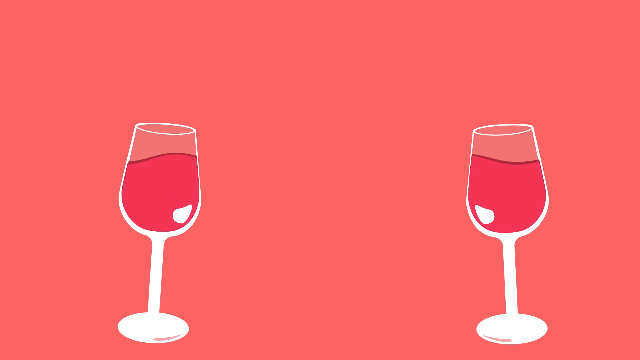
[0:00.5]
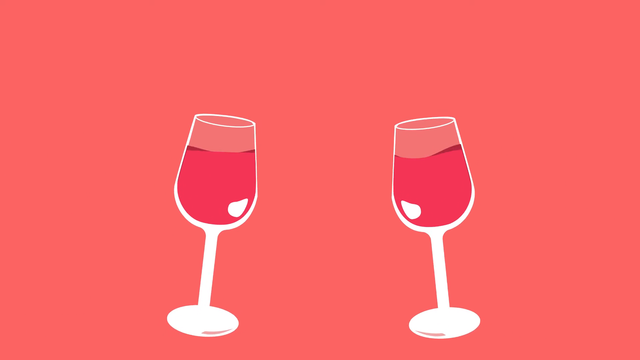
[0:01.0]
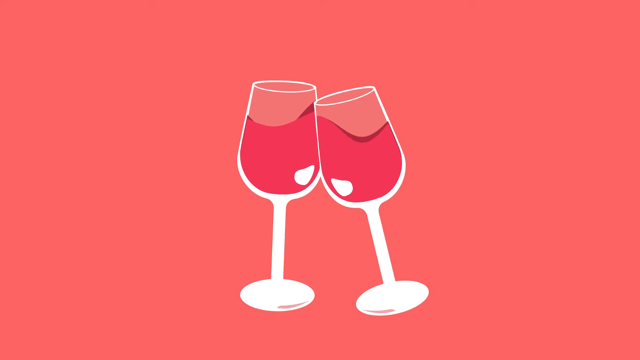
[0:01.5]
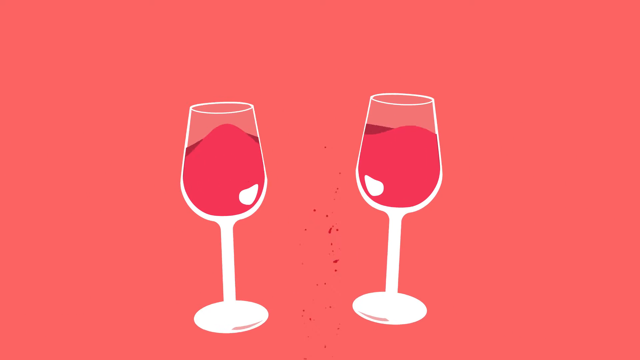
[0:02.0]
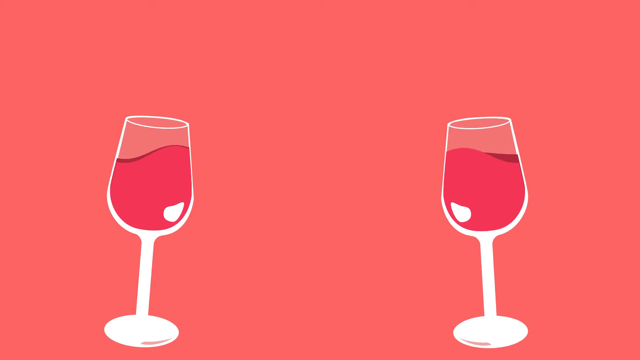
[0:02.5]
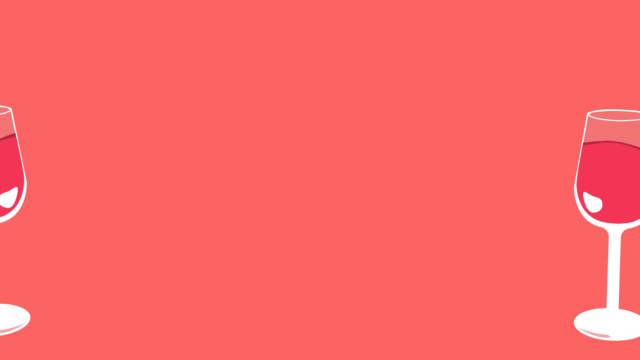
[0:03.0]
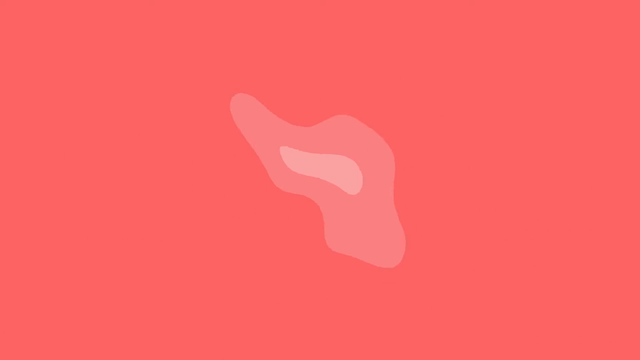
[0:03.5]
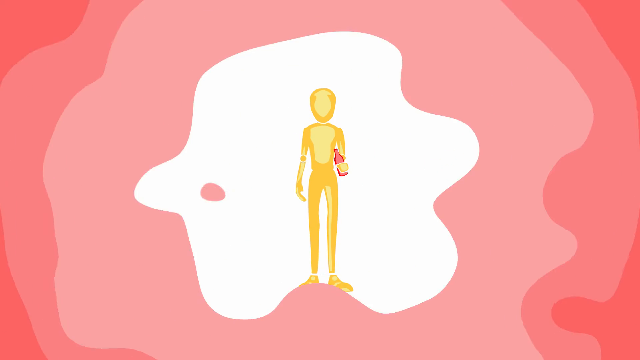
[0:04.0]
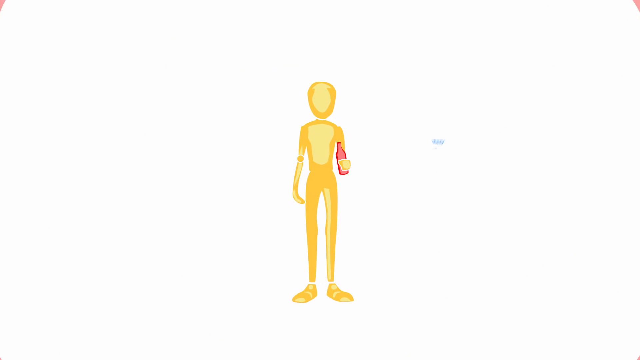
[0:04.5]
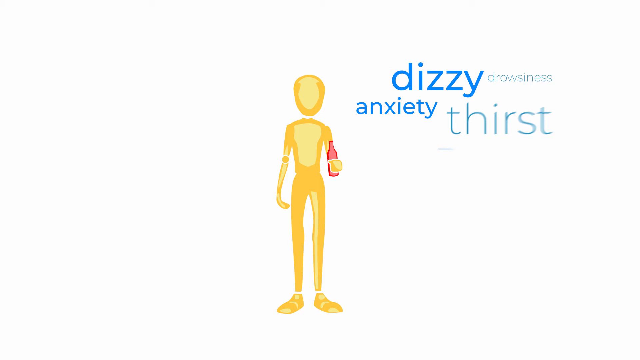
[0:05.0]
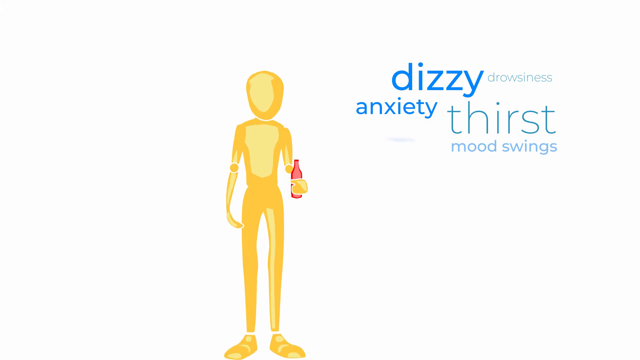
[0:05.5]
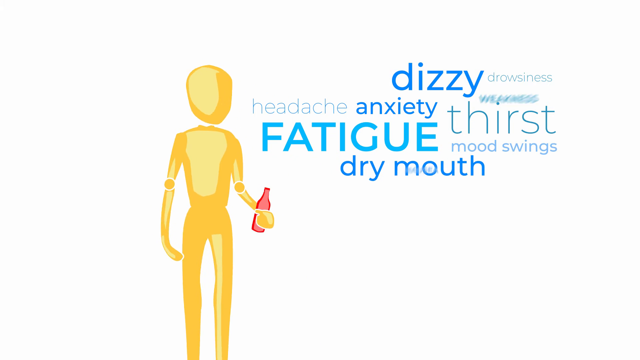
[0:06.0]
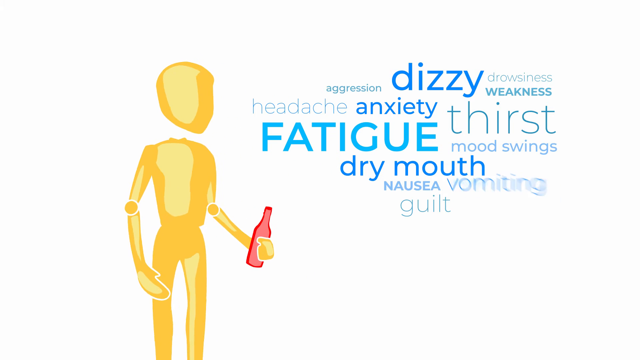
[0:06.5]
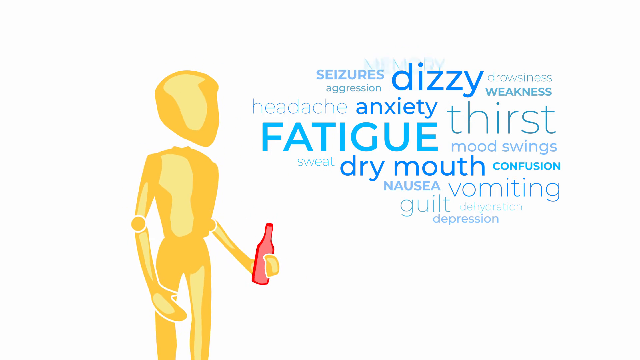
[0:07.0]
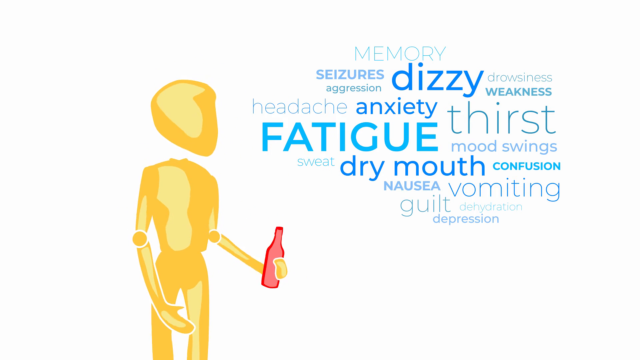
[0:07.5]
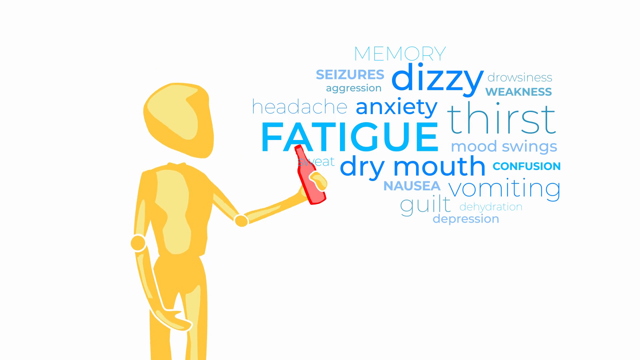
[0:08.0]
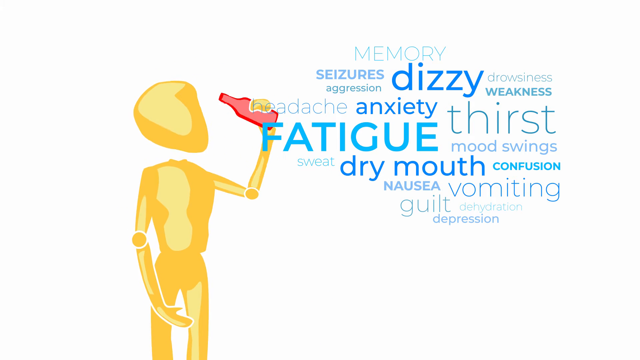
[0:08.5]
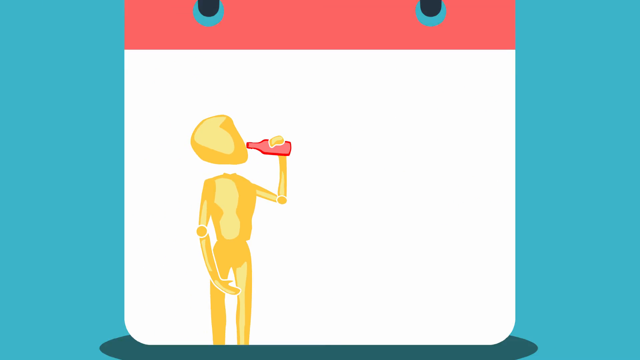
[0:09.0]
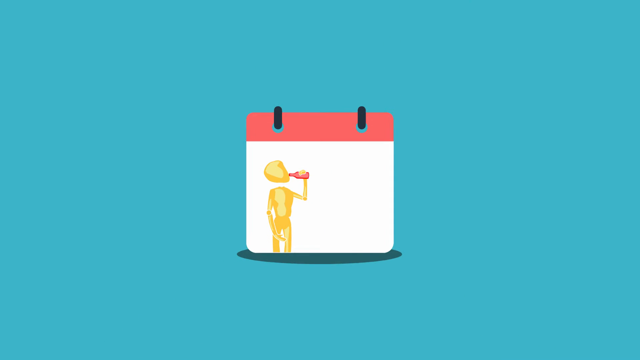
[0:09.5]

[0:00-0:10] The video is digitally produced and cartoon-like. Two glasses of wine click together in the center of the page, and then words pop up. A figure that looks somewhat like a mannequin without a face, essentially a silhouette, appears; it is somewhat yellowish and holds a drink of some sort in its hand, possibly beer. Text reads "dizzy," "drowsiness," "weakness," "headache," "anxiety," "thirst," "mood swings," "fatigue," "dry mouth," "nausea," "guilt," and then other words pop up, such as "seizures" and "memory." The page then turns, the words drop off, and the page shows the same person drinking the drink. Behind that image there is a partial glass of wine. The scene then cuts to a whole background in a somewhat reddish color, with the glass and the picture on a white background against the darker red.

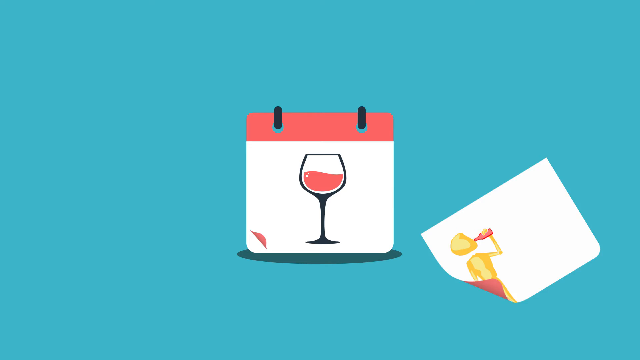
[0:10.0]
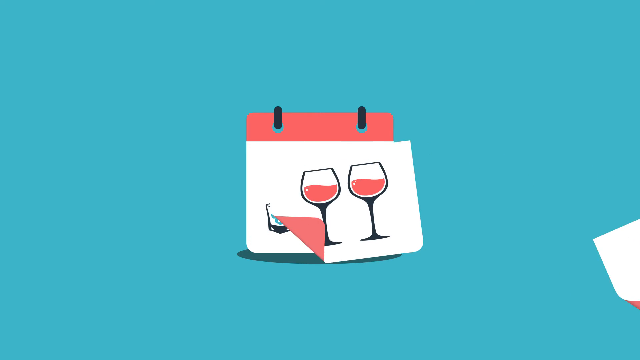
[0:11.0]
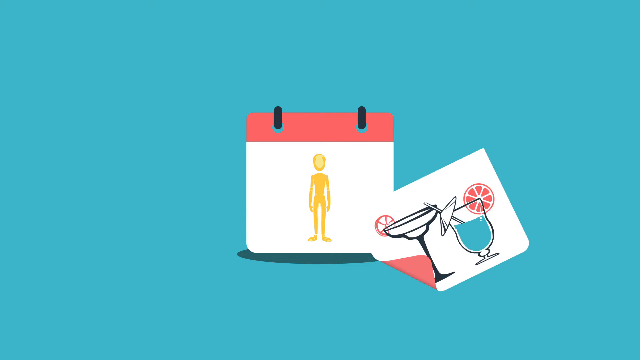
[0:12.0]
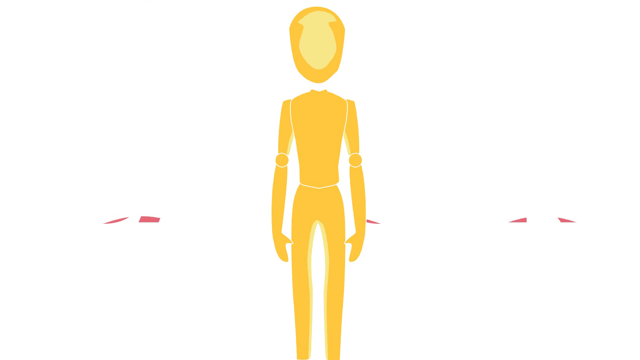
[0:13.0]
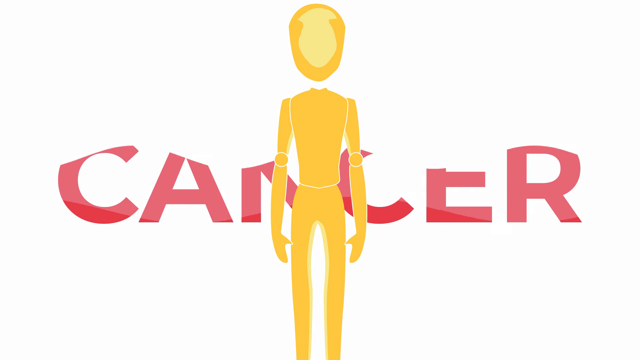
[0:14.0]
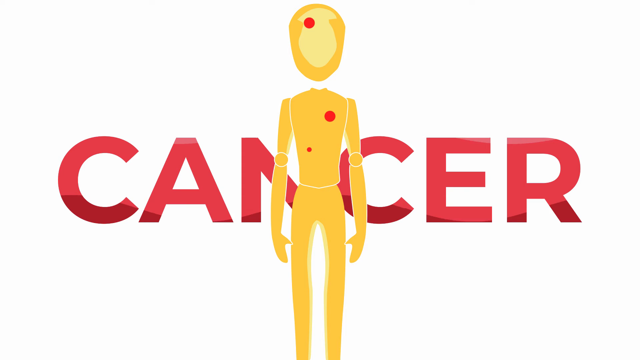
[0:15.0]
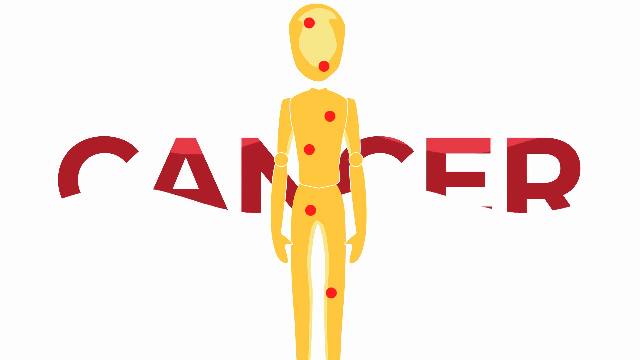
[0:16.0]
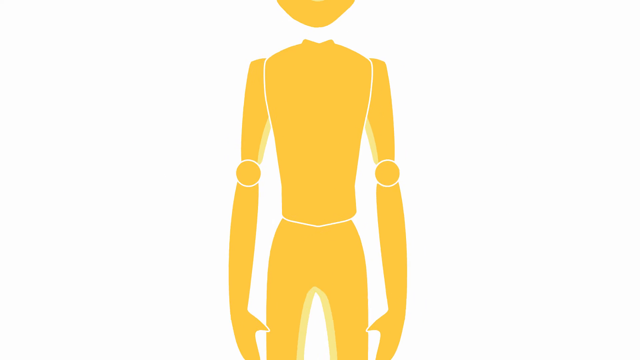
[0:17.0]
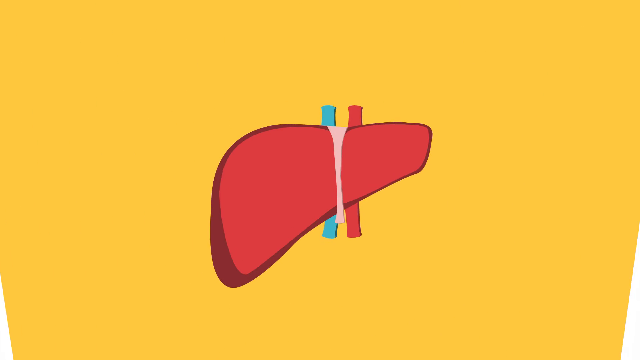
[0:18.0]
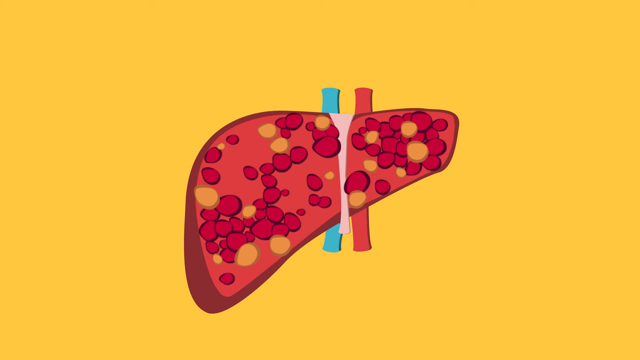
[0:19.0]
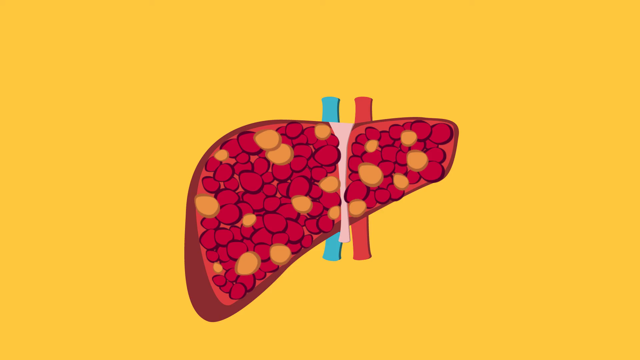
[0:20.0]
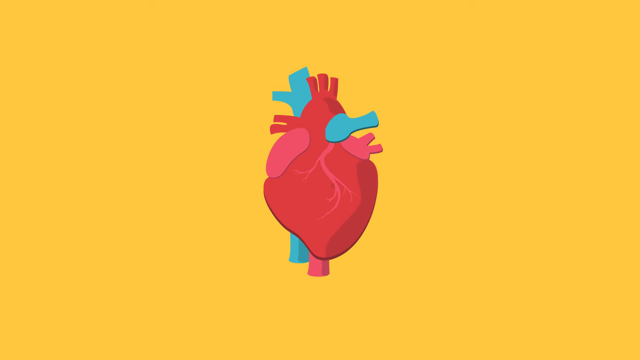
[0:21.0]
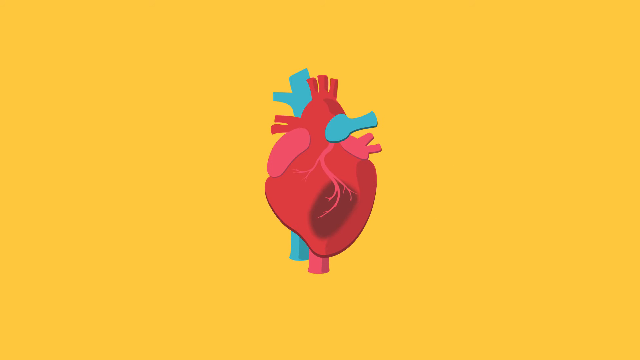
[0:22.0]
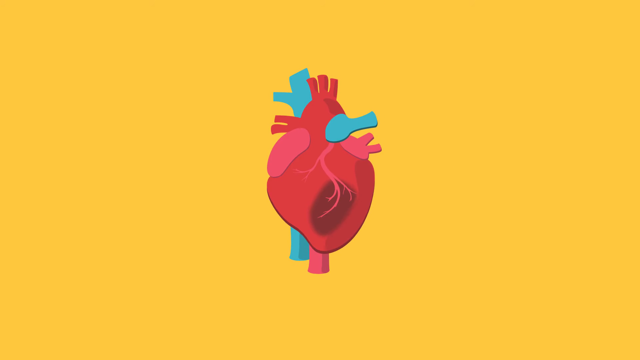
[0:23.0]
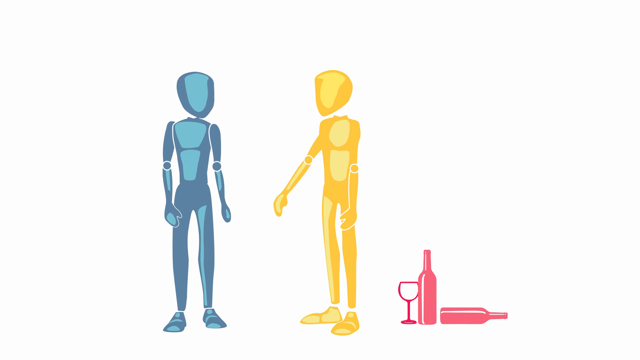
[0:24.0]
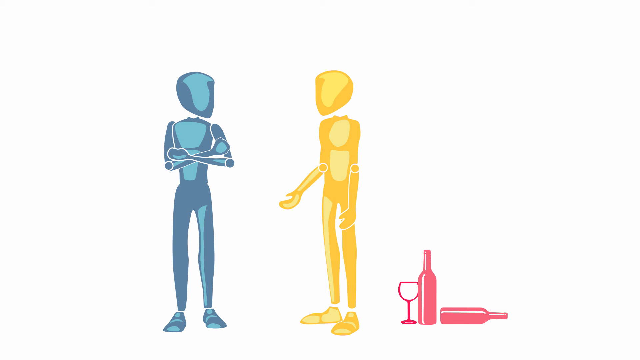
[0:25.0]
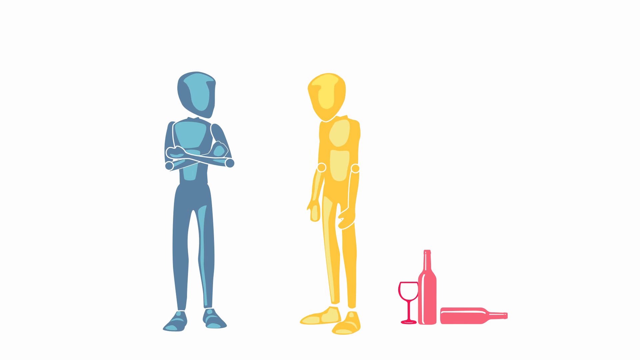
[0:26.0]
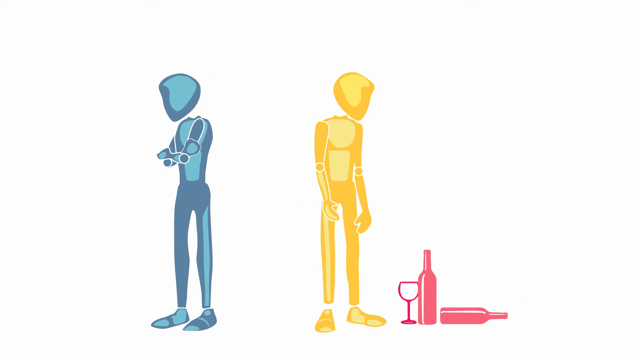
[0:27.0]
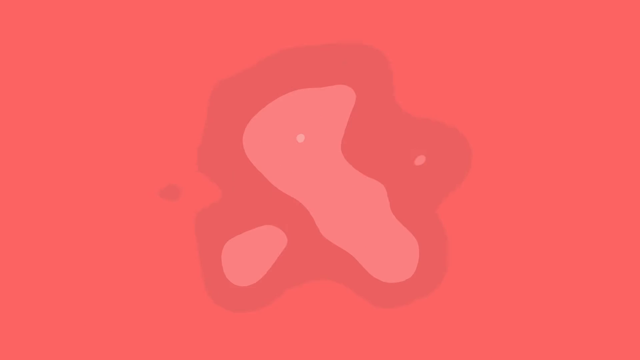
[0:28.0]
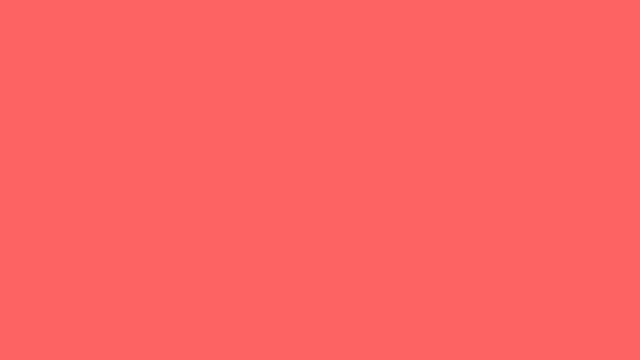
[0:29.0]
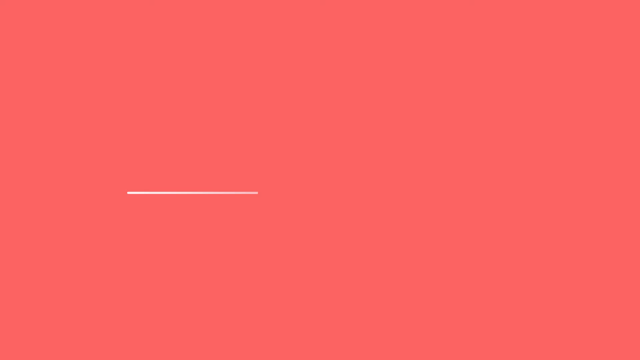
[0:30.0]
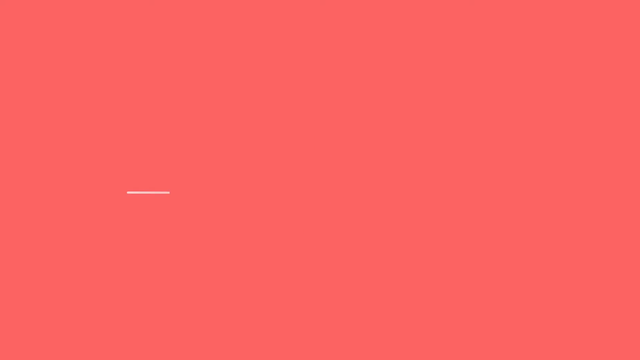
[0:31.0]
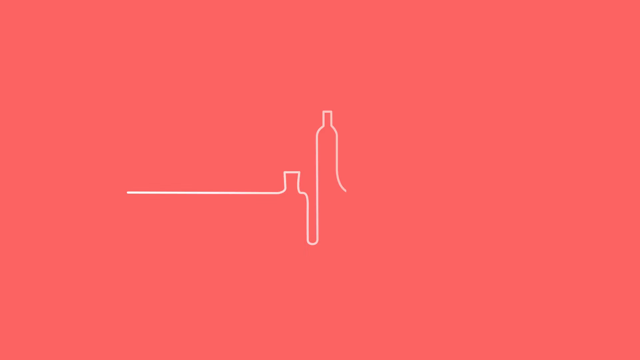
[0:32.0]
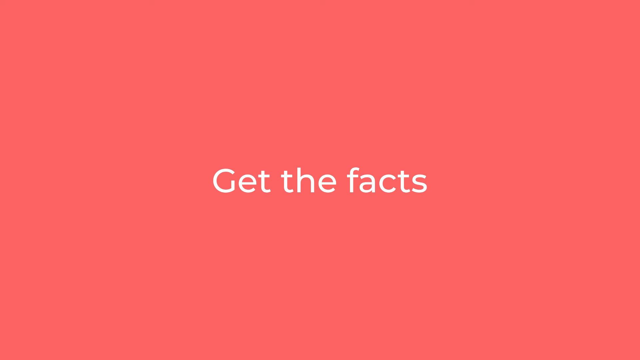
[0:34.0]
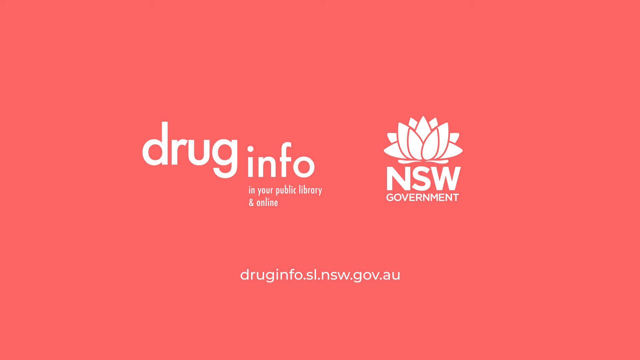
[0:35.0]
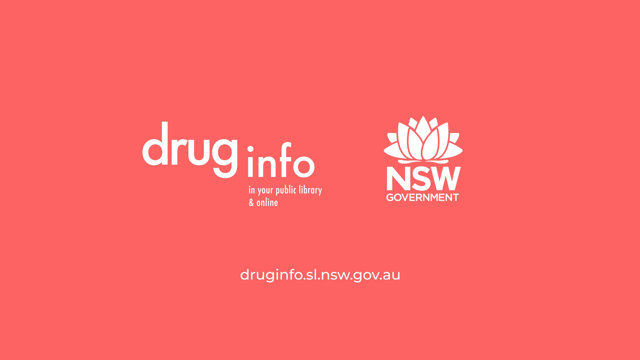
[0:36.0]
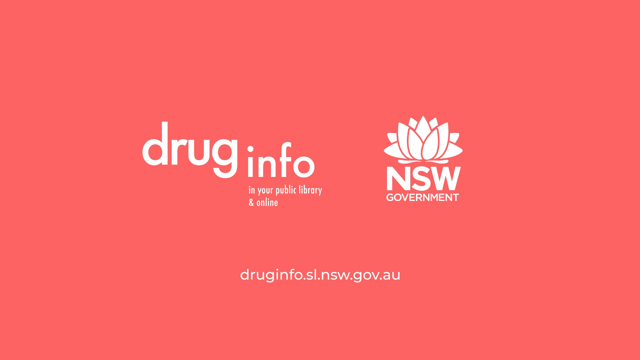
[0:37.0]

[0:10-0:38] Two glasses of champagne are shown, and then two glasses of wine. They are on something like a paper binder, and the page rips off and moves. Next come two beers and a drink, then some margaritas. A person is shown, and words slowly come up from the bottom reading "cancer." Spots appear on the silhouette of the person, and the word "cancer" disappears. Organs in the body are shown deteriorating, and the heart is pumping harder. The person is then talking to a friend, who crosses their arms and turns away. A heartbeat signal shows a single heartbeat, and the signal turns into the shape of a wine glass. Text then reads "get the facts," "drug info," and "in your public library and online." It also says "NSW government," with their website at the bottom.